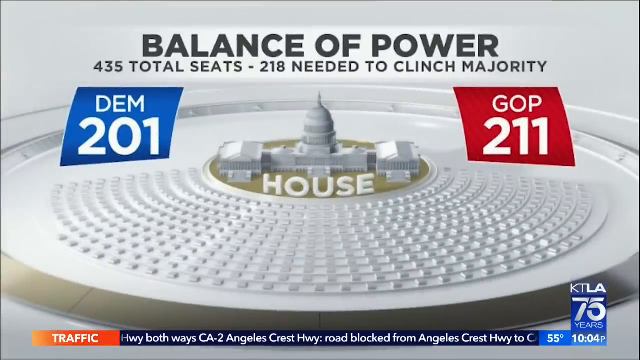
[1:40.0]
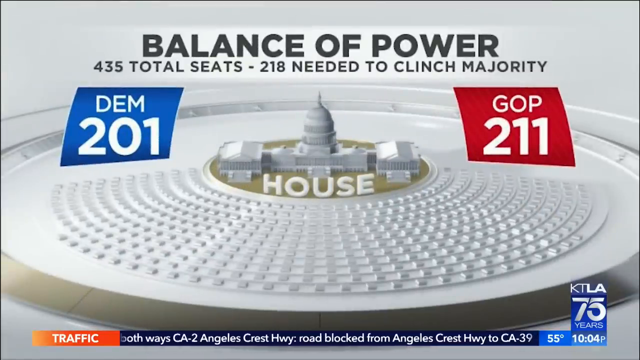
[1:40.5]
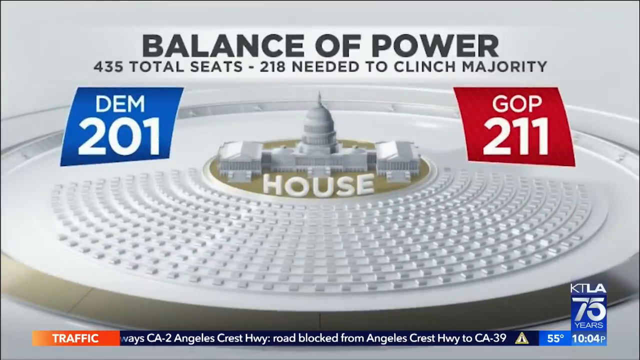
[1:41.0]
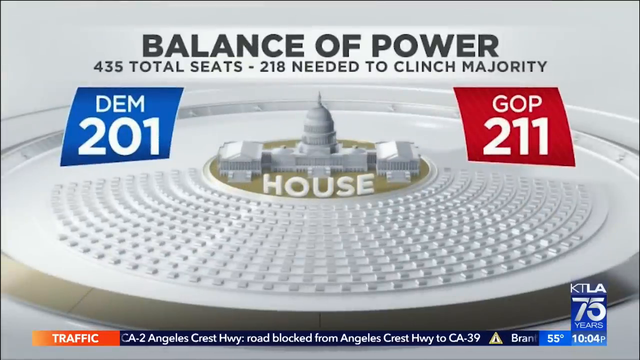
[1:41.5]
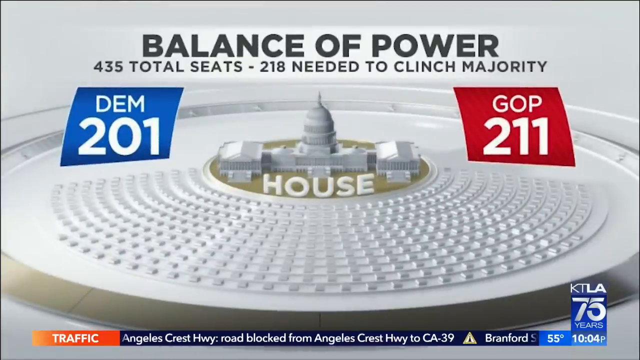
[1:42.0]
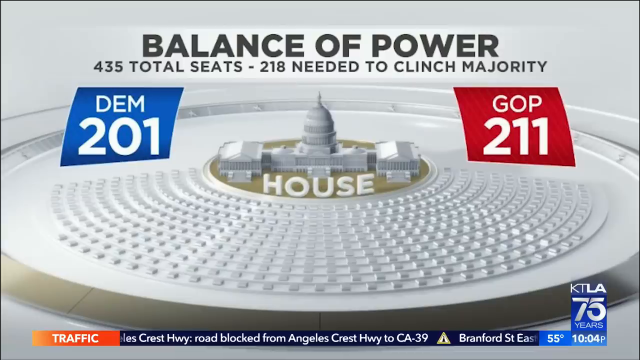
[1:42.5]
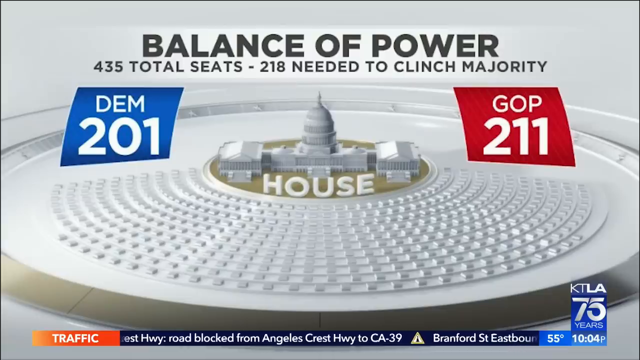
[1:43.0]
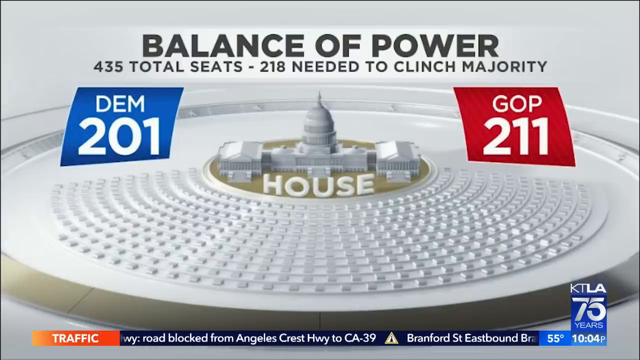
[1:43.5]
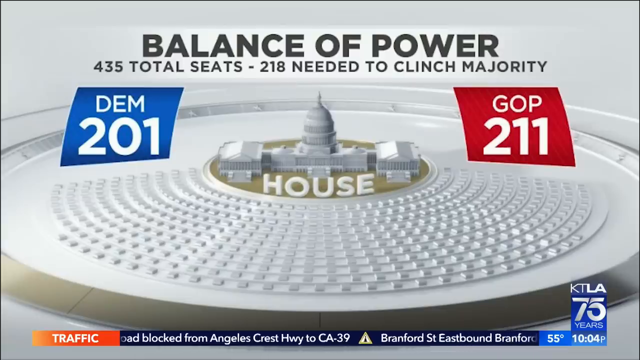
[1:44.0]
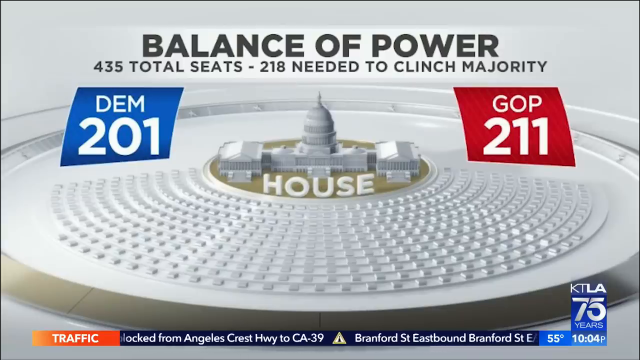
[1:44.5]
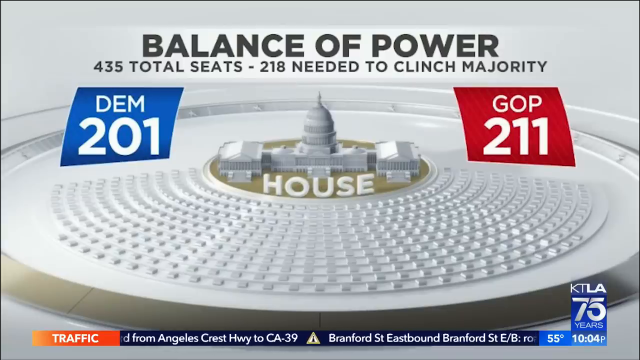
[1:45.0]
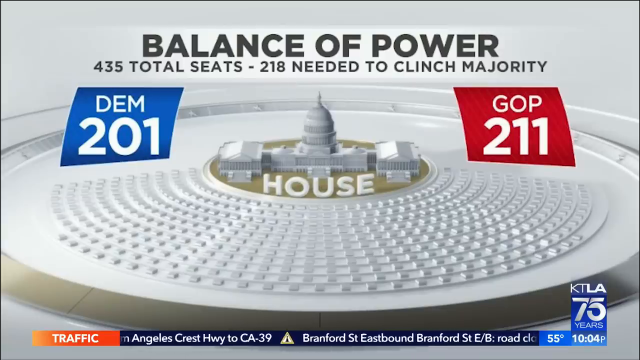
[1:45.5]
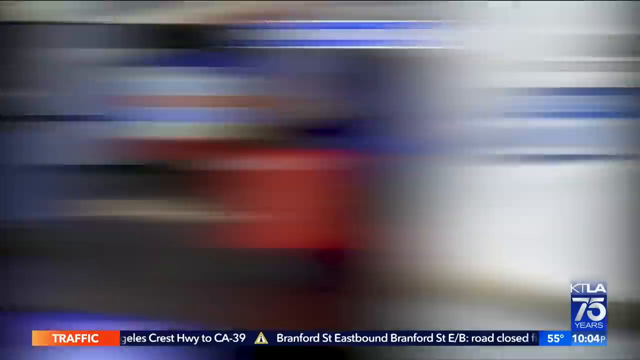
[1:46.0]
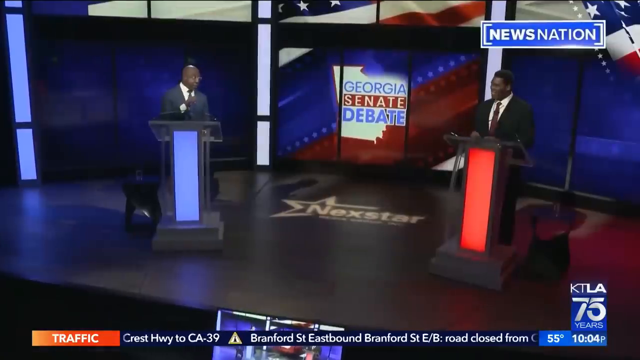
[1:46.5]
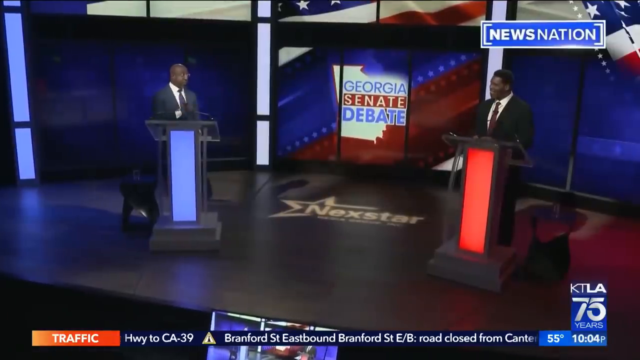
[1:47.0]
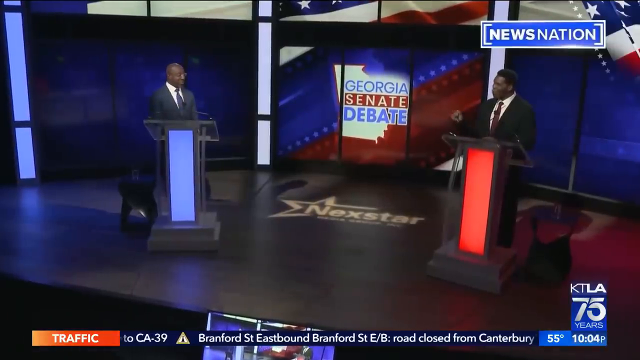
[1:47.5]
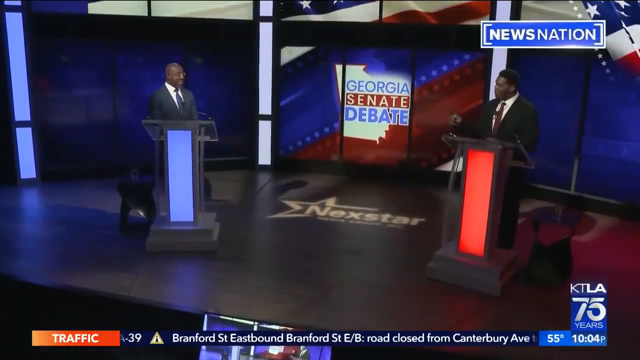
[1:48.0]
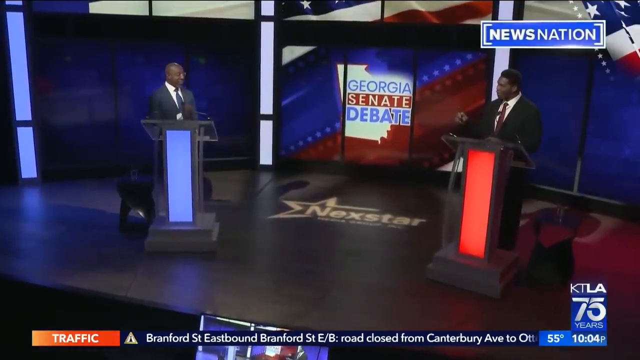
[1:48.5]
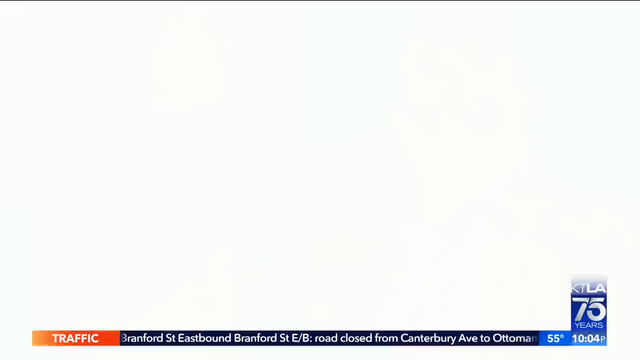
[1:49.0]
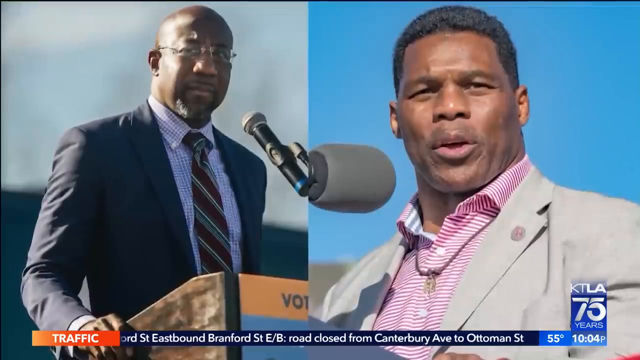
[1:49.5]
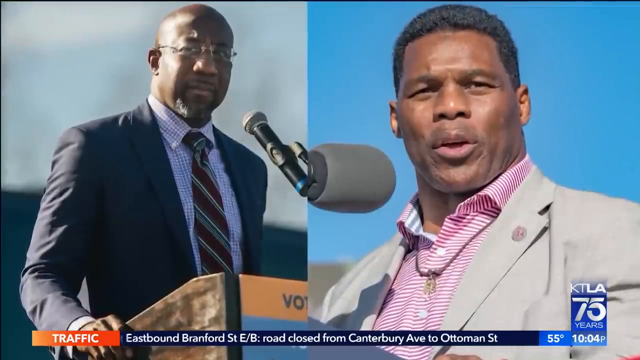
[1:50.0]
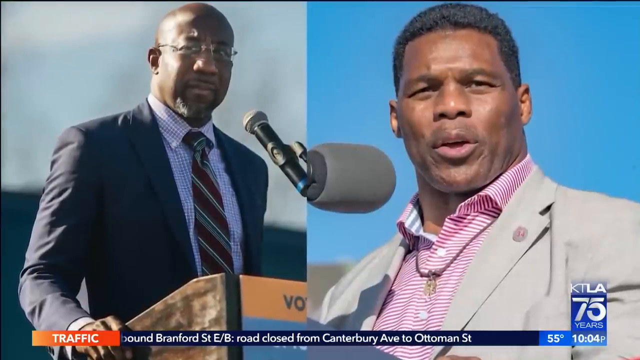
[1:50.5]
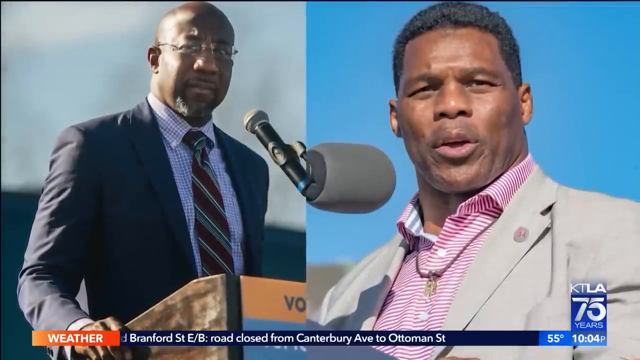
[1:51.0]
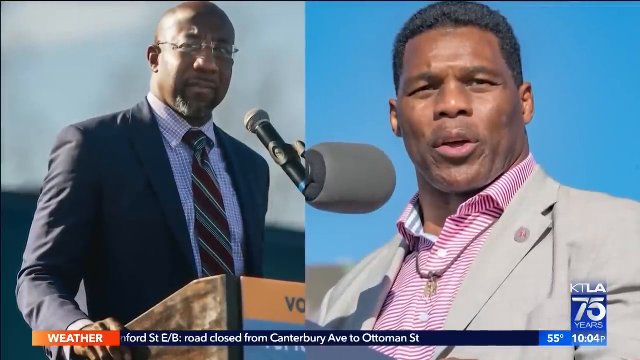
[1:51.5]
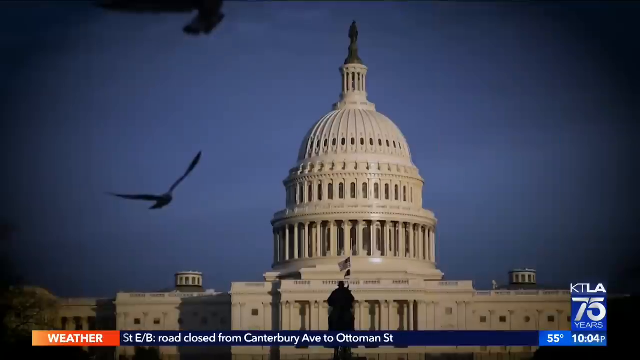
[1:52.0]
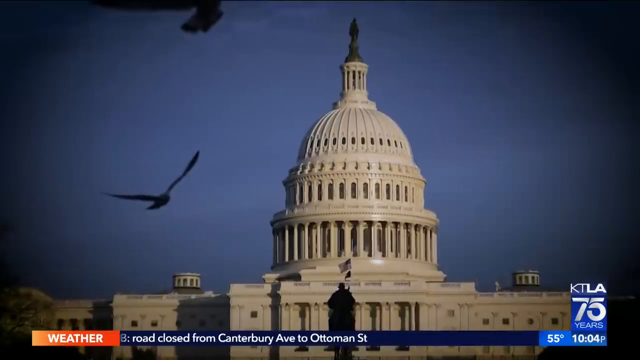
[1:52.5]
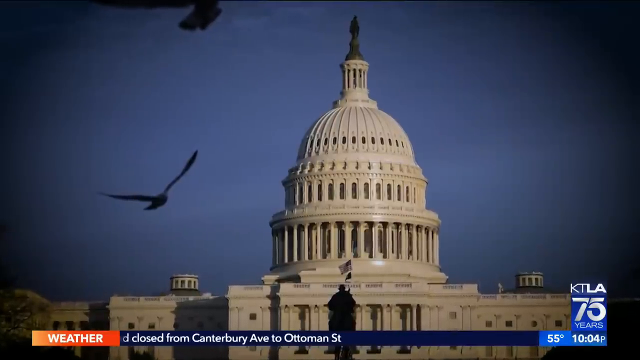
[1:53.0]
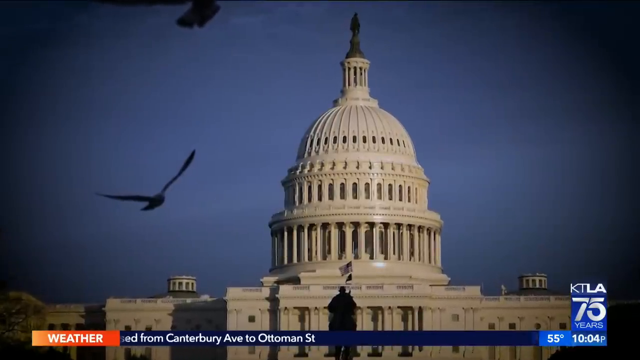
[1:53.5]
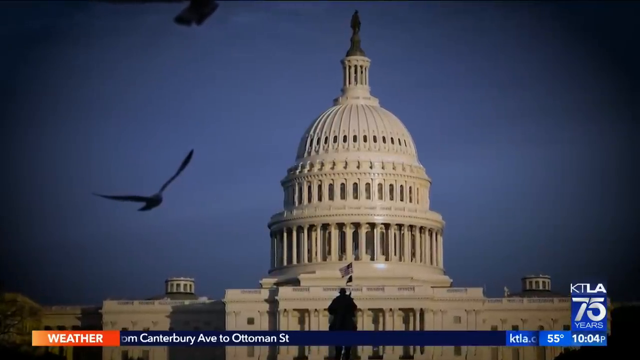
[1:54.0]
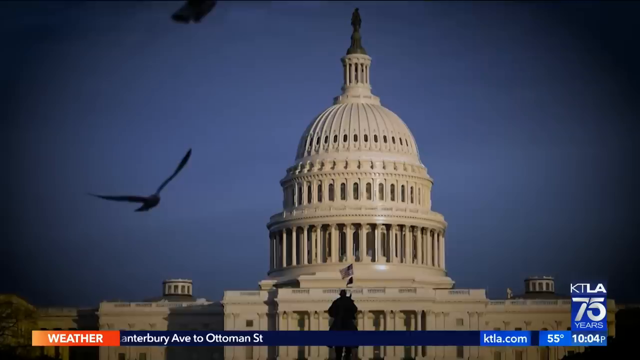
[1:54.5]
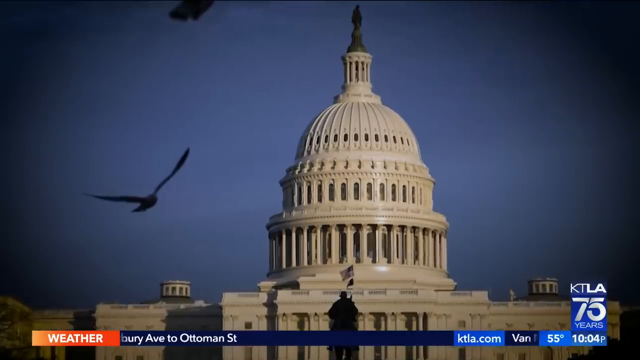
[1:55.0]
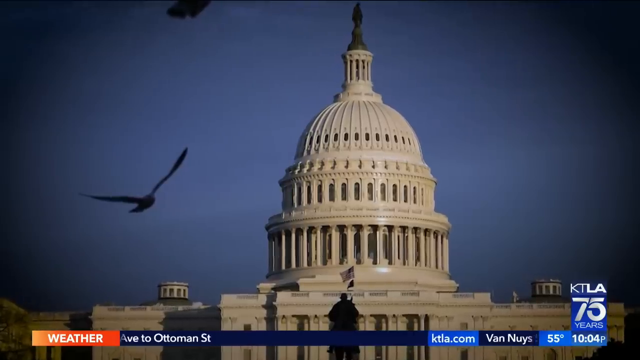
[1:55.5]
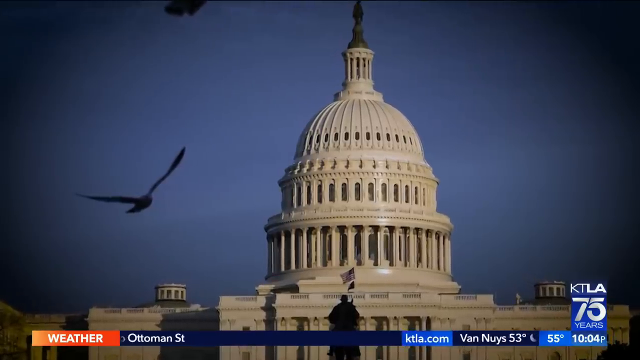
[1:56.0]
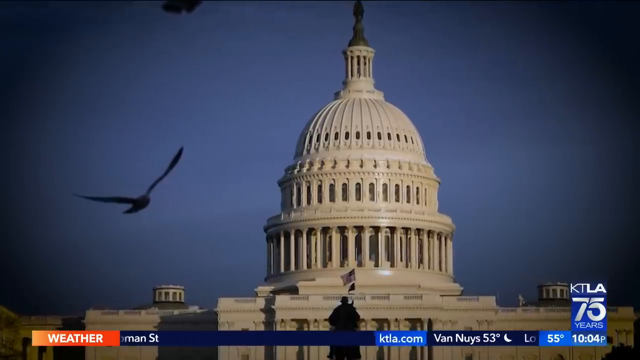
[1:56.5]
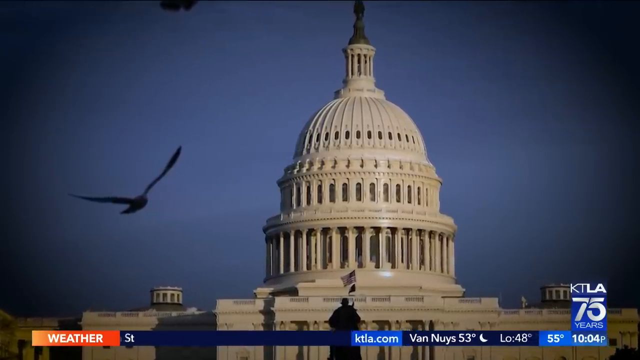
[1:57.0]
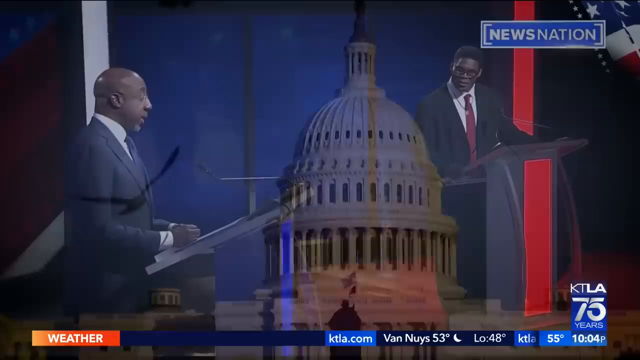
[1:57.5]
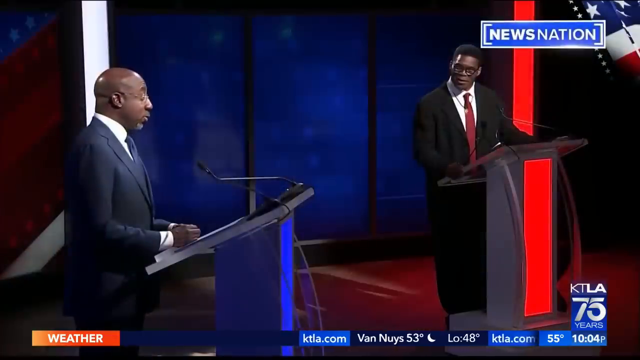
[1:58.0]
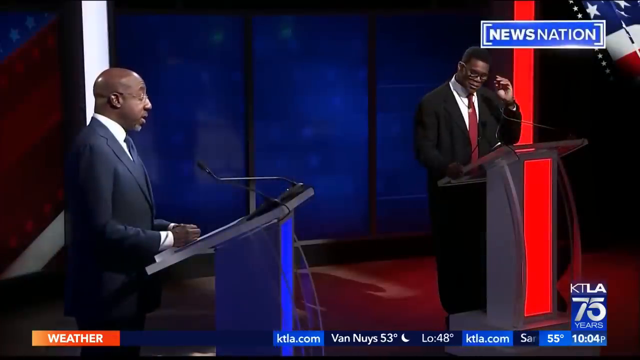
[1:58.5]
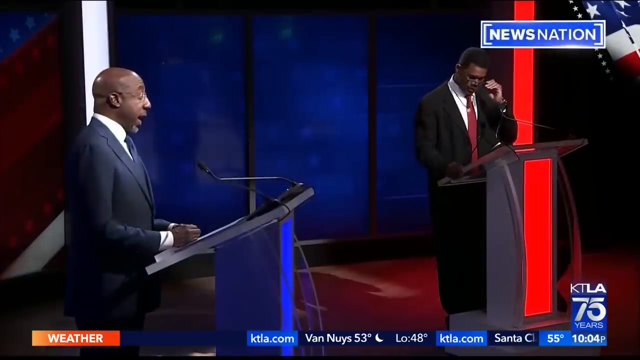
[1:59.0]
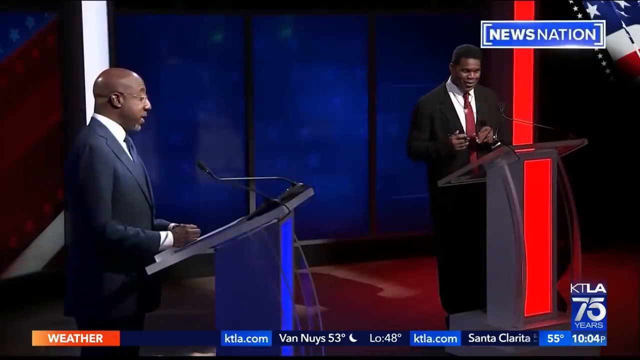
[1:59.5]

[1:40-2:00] The footage starts with the balance of power, GOP and Dems at 211 to 201, then cuts to the Georgia Senate debate or results, apparently Raphael Warnock against Herschel Walker. The coverage alternates between the current balance of power and Warnock set against Walker, and it closes with a real picture of the Capitol building with an eagle soaring against the backdrop of a blue sky.